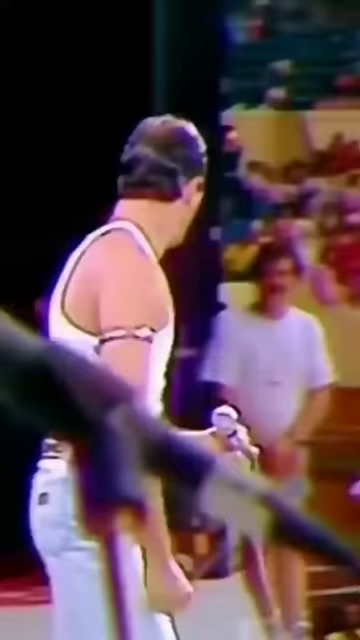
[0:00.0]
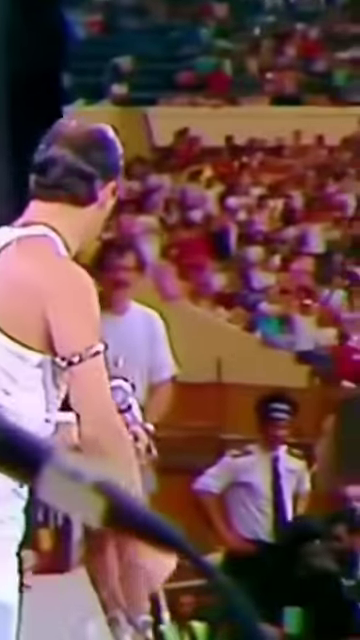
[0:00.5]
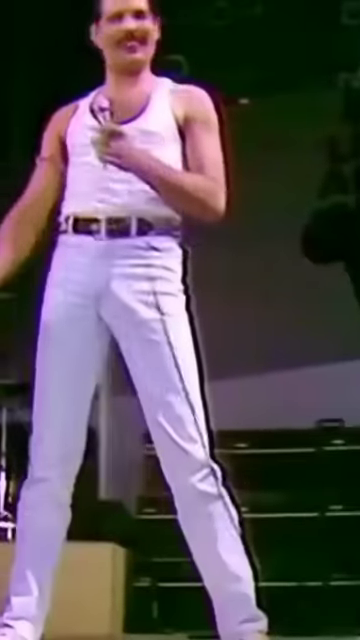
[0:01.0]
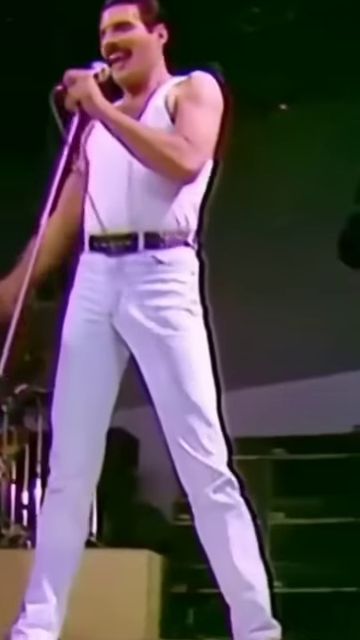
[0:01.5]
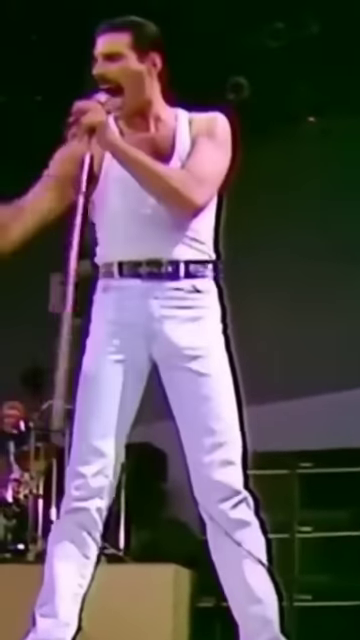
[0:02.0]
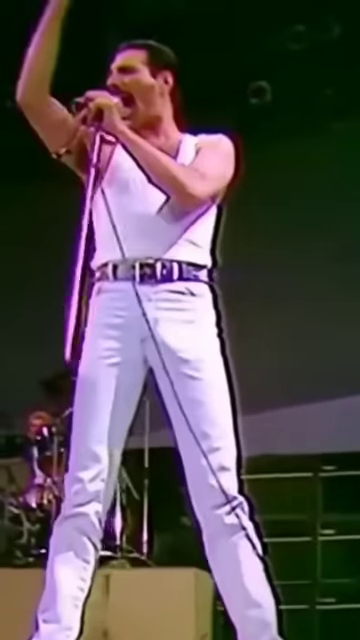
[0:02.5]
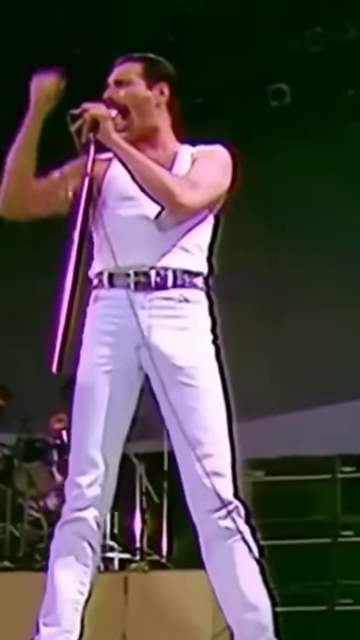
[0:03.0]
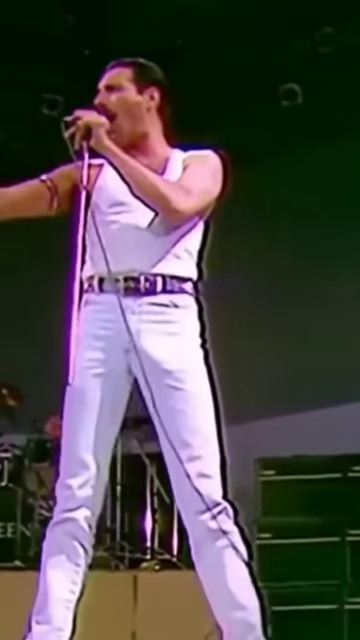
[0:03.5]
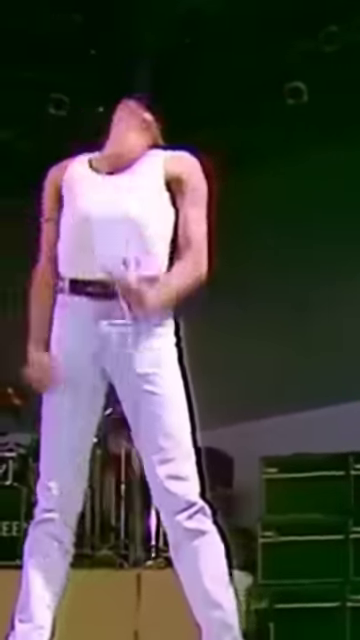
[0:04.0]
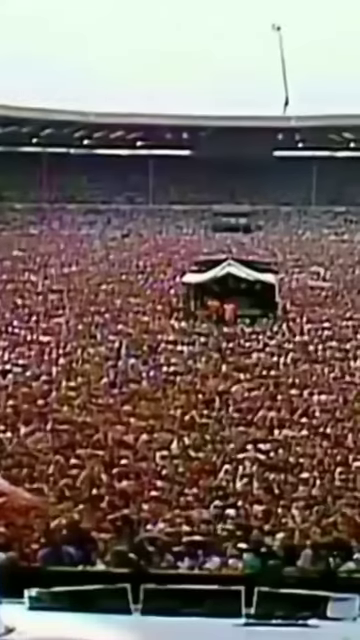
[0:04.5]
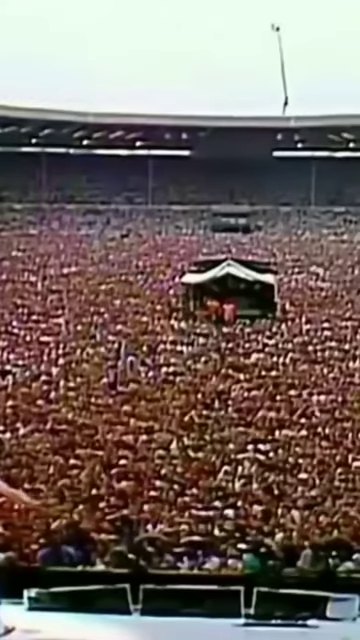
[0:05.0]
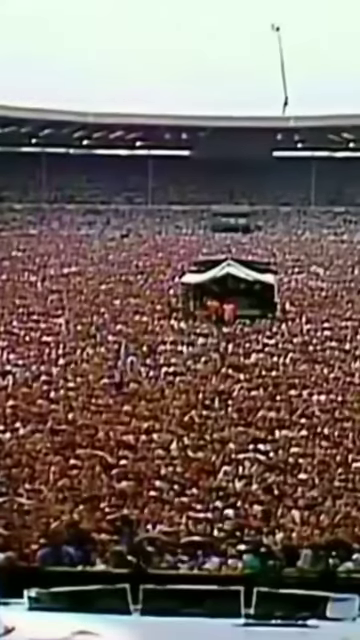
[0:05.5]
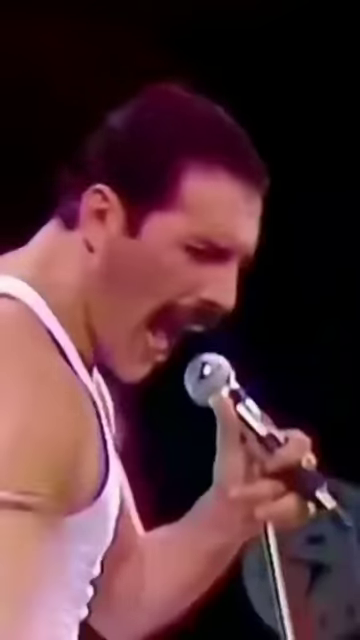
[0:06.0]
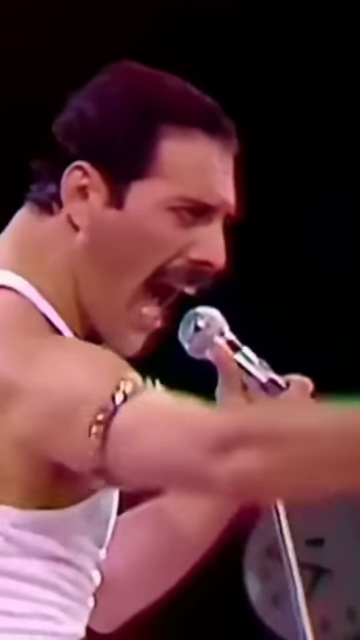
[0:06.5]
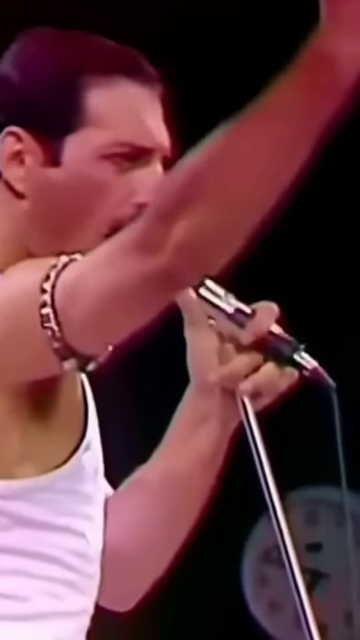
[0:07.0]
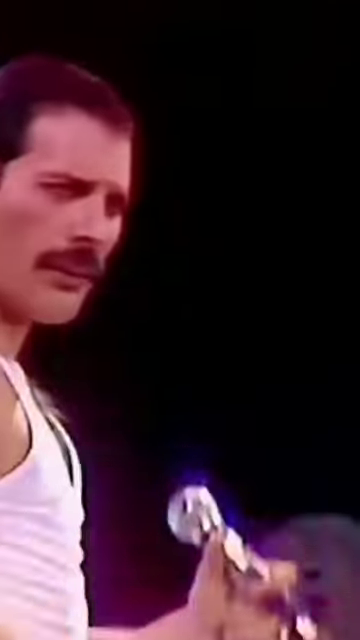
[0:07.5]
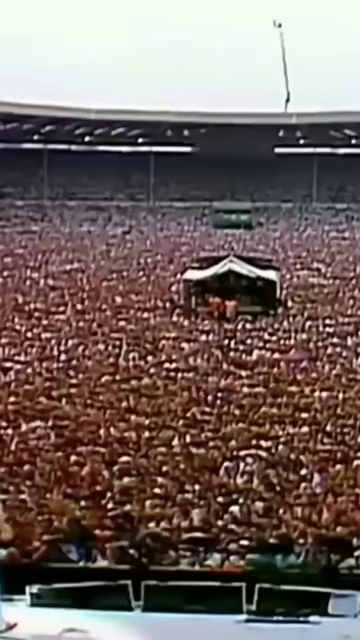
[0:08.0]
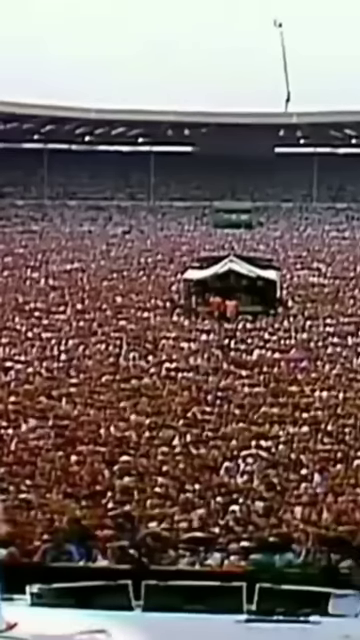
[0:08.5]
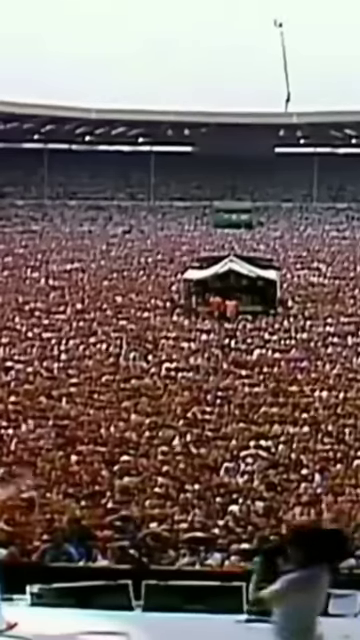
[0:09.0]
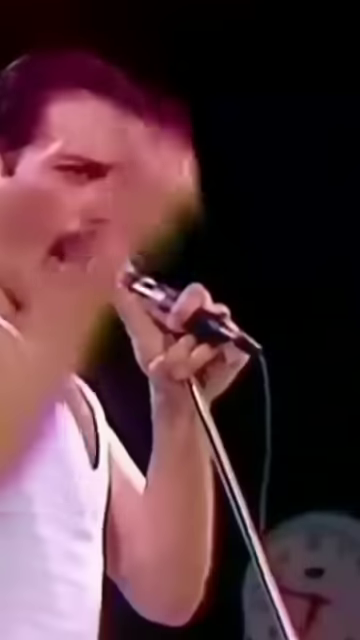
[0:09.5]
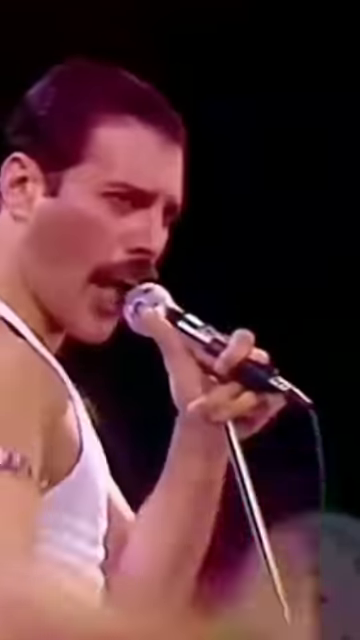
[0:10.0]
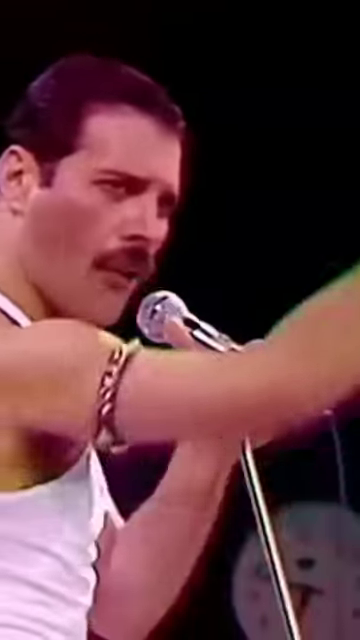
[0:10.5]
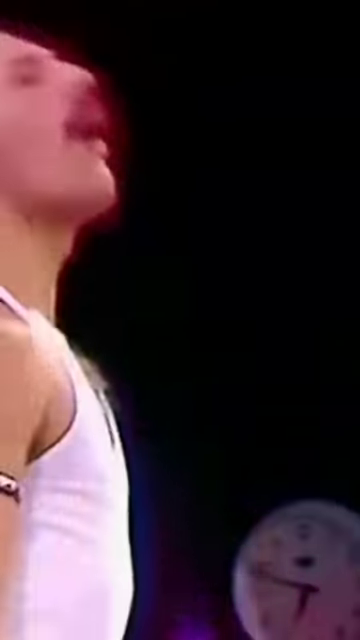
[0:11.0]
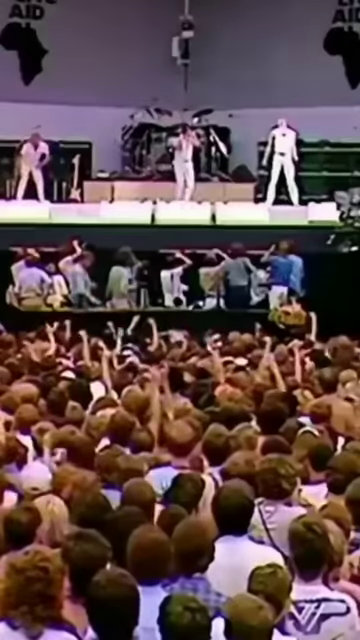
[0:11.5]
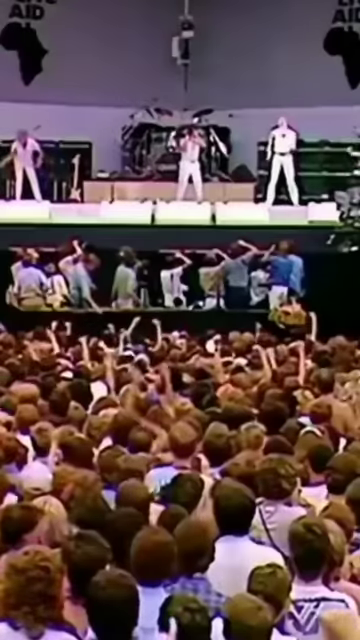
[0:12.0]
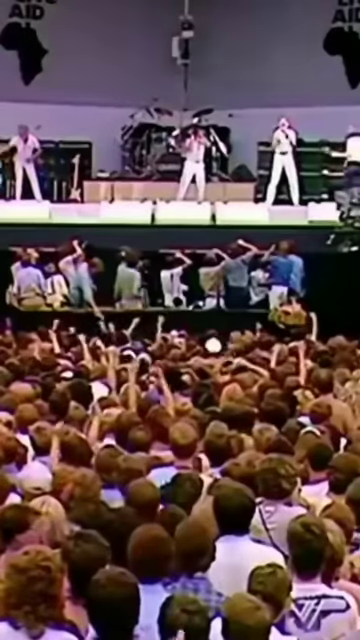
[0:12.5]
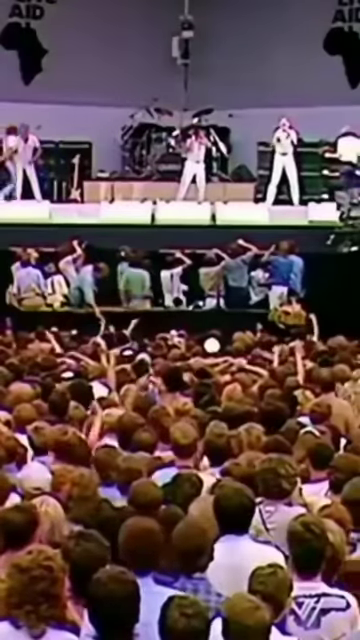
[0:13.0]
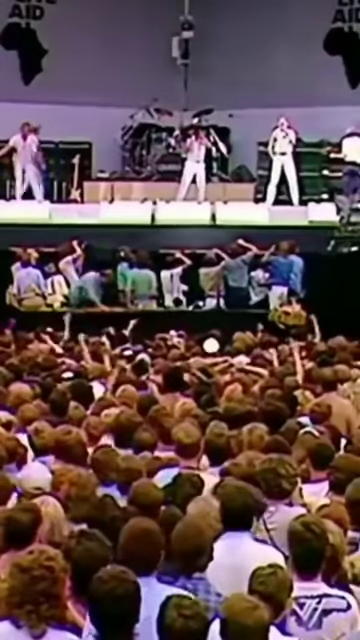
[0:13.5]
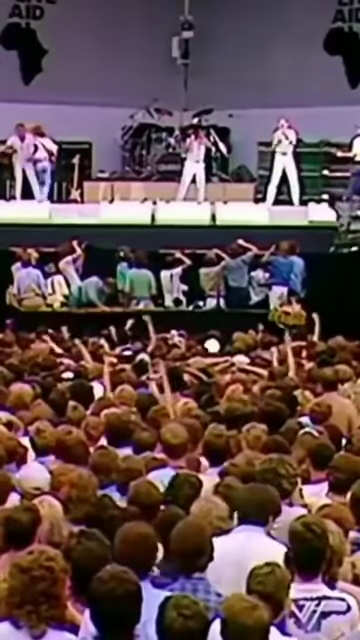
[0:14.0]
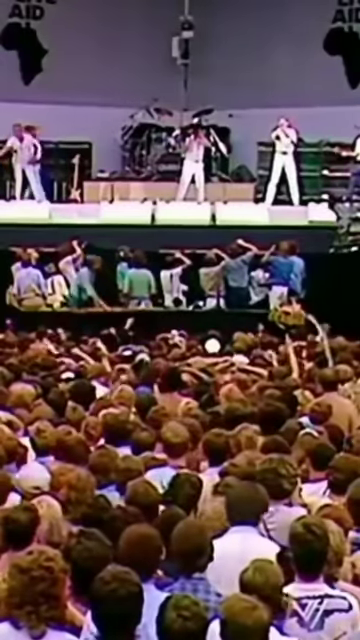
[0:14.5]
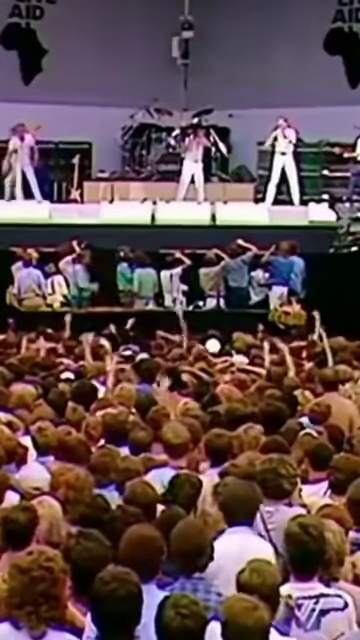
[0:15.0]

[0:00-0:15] Freddie Mercury of Queen performs on a stage in front of a huge crowd, somewhere between a hundred thousand people and millions. He wears a white tank top and white jeans and performs on a microphone, very animated in the way he moves his hand. Judging from the way the crowd is shown, the footage is probably from the height of Queen's popularity. The performance takes place during the daytime, on top of a stage, with some photographers in front of the performers.